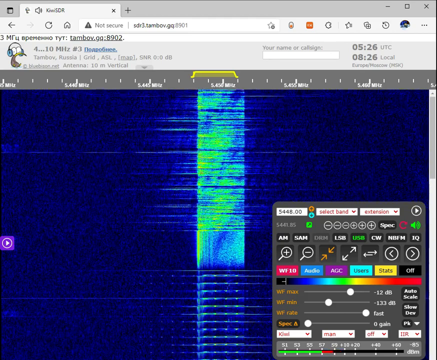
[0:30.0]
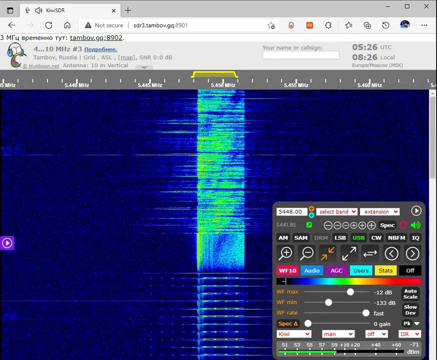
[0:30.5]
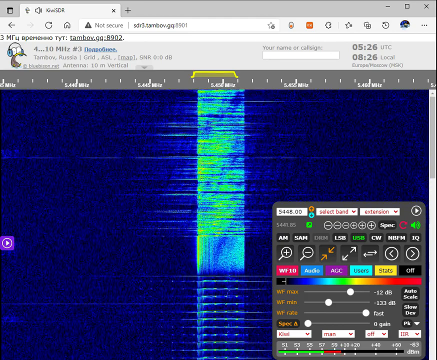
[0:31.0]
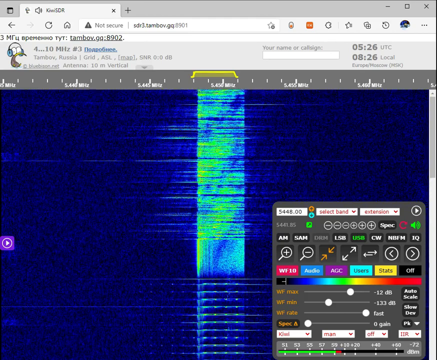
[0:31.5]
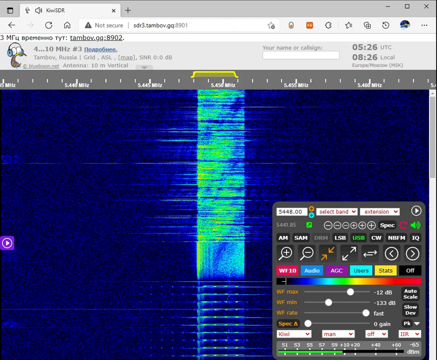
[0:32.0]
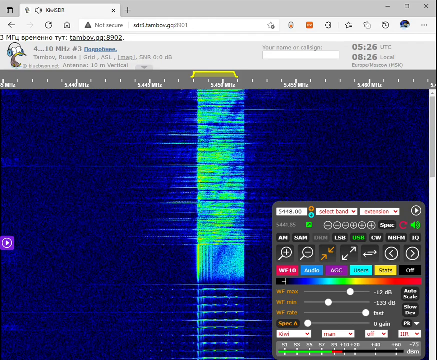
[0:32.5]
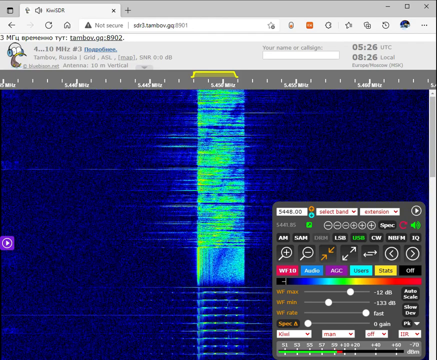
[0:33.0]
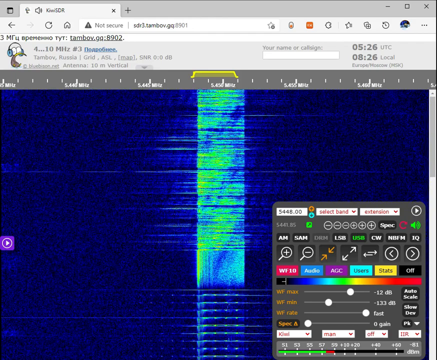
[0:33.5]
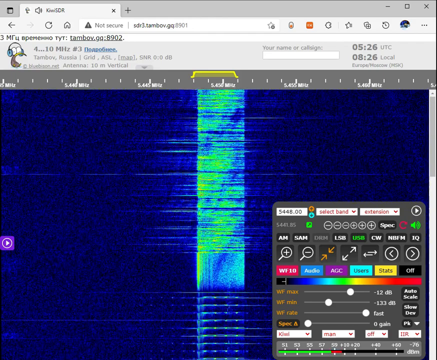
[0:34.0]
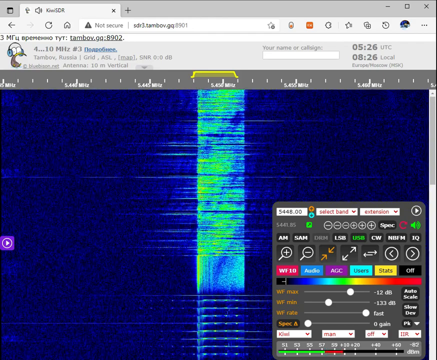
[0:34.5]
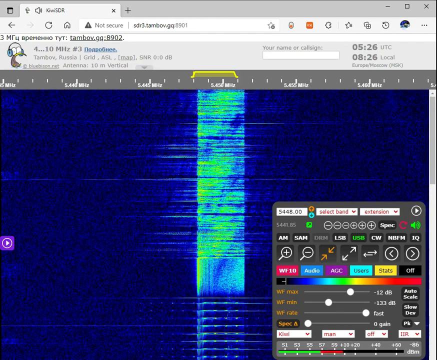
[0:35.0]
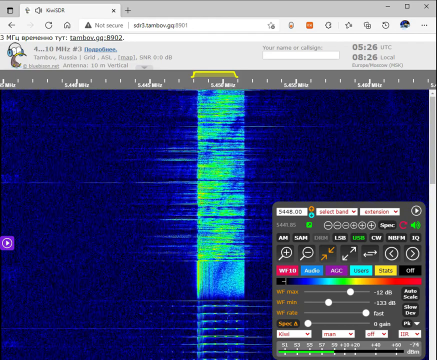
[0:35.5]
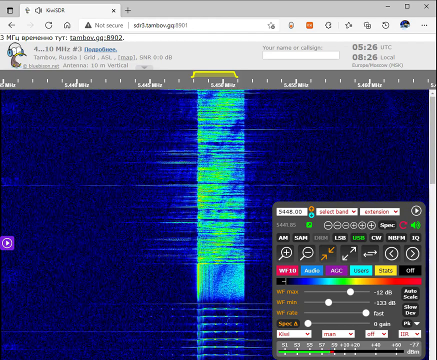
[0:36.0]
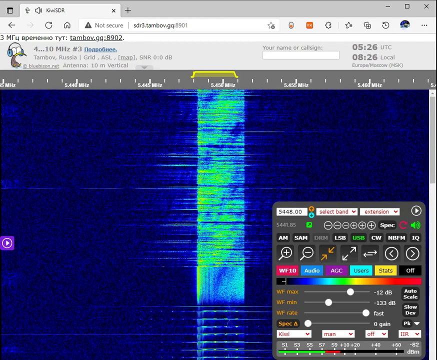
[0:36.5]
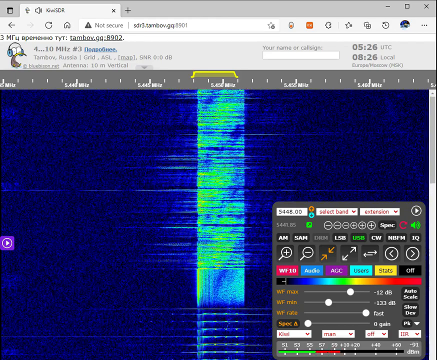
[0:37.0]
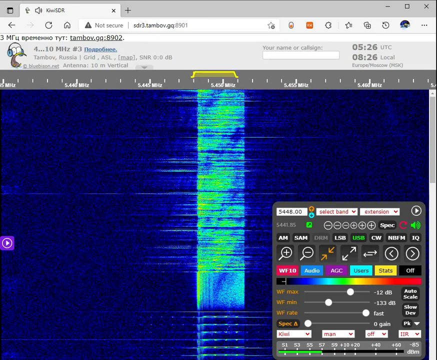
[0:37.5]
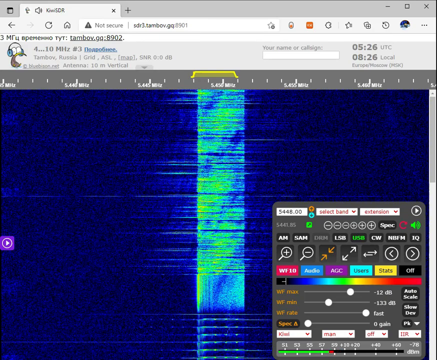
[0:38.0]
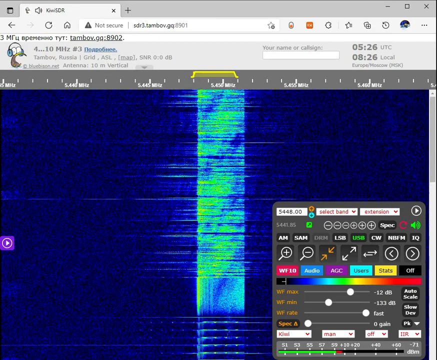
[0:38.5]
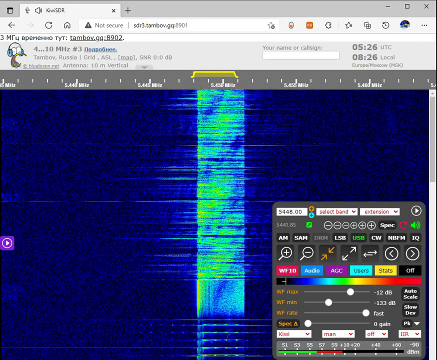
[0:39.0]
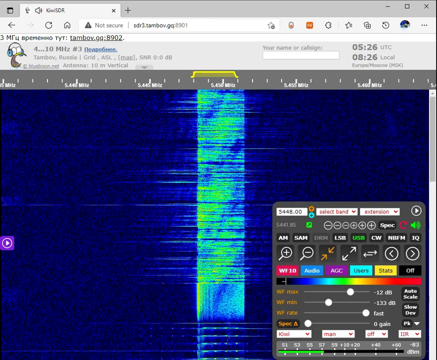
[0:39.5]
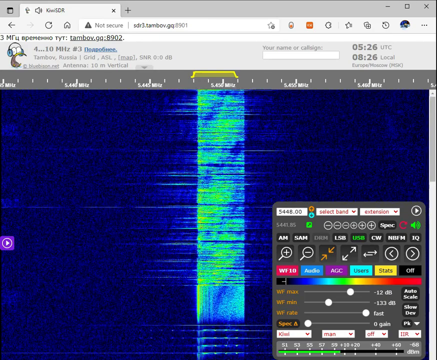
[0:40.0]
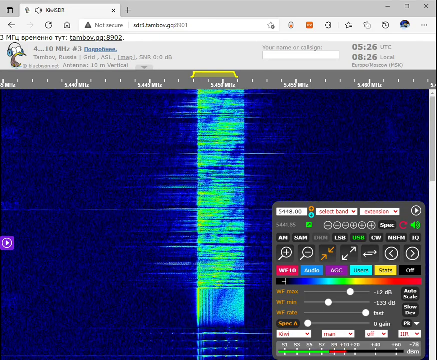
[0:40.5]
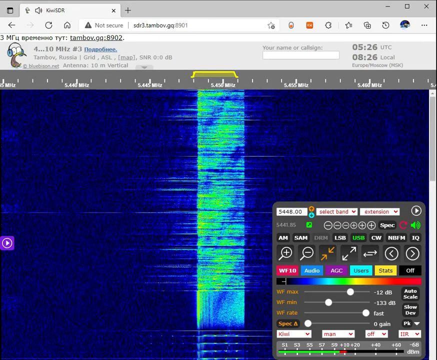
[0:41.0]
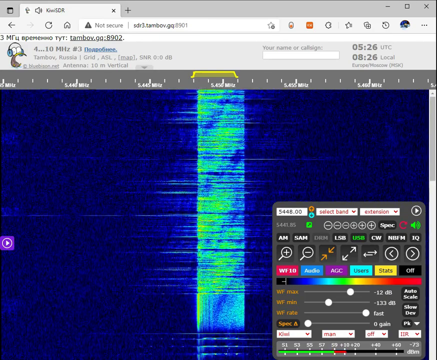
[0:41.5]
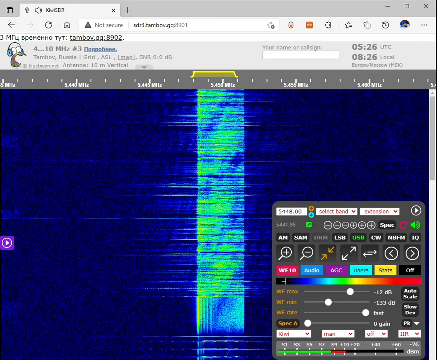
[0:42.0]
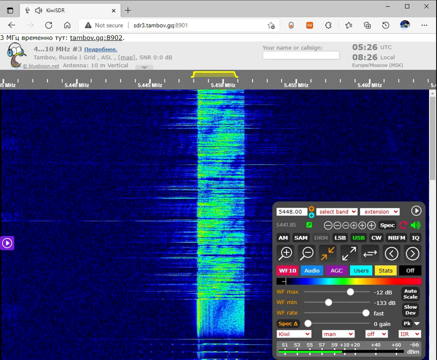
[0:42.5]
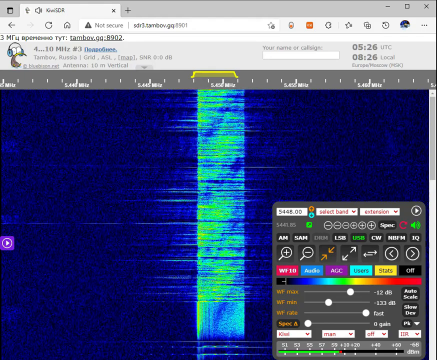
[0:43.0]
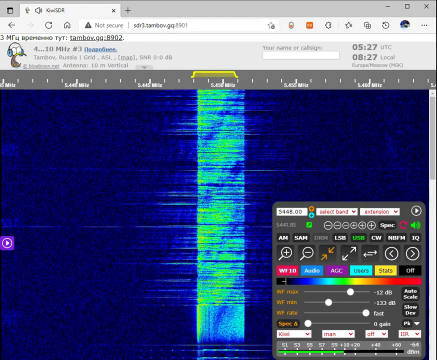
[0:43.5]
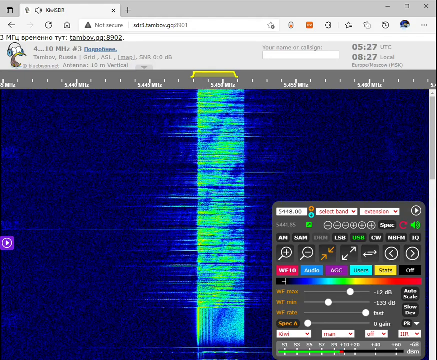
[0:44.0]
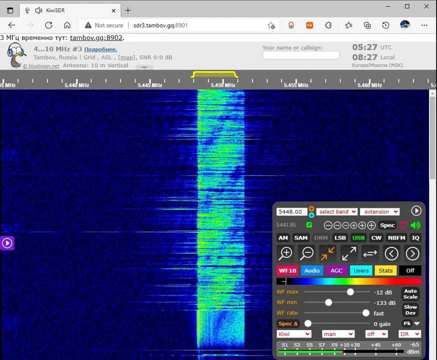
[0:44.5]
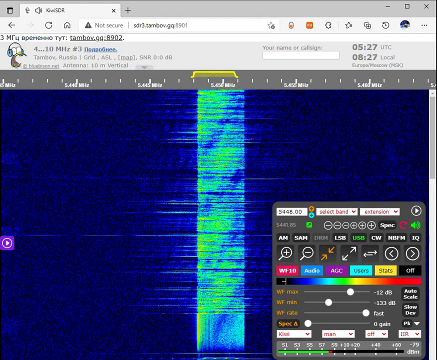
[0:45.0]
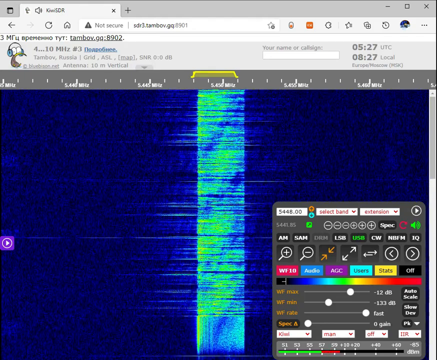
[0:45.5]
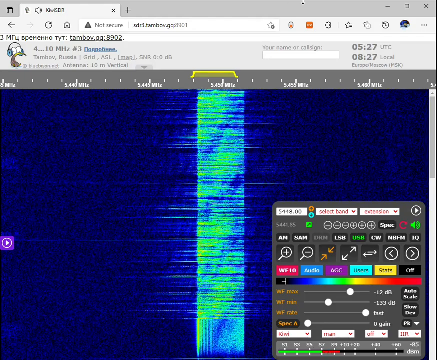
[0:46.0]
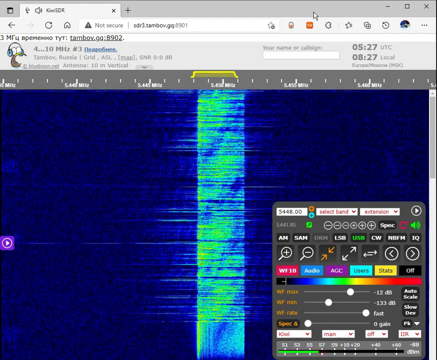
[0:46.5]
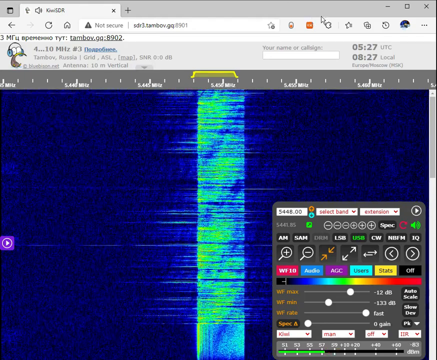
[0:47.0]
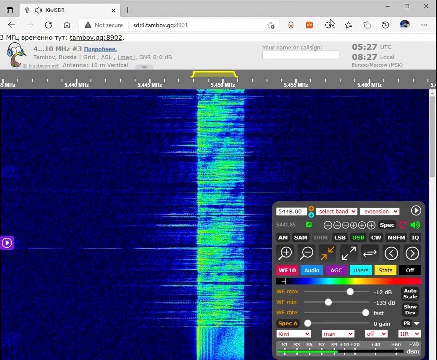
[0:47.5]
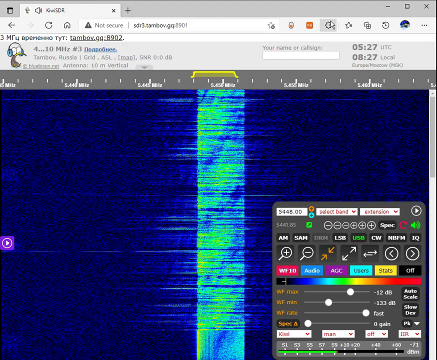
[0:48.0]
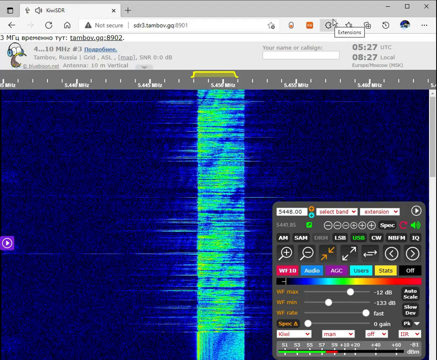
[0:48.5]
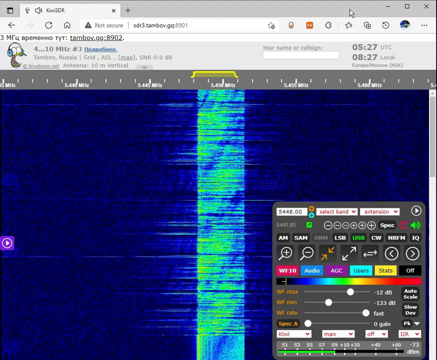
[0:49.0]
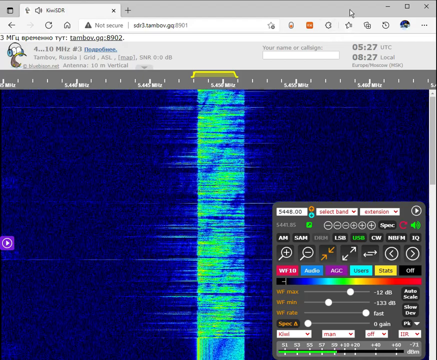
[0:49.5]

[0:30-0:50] The band in the middle gets thicker and wider and extends upward as a thick band in sort of a yellow, with some of the blue background showing through along with light green. The band moves downward, growing thicker as it moves, with new data coming in from the top. The display seems to be at 5.450 MHz. The time in the upper right corner also changes: it shows UTC time and local time marked "Europe/Moscow (MSK)", with UTC going from 5:26 to 5:27 and local time going from 8:26 to 8:27. The display seems to be an audio recording shown in graphic form.